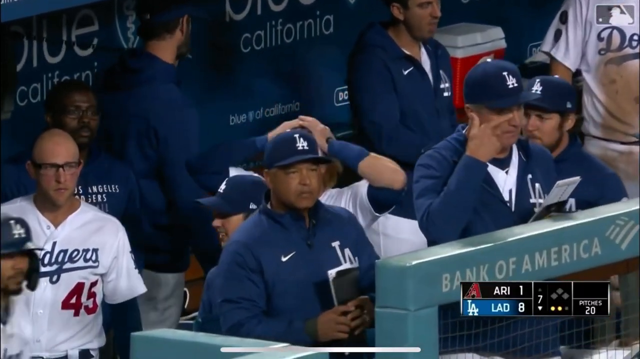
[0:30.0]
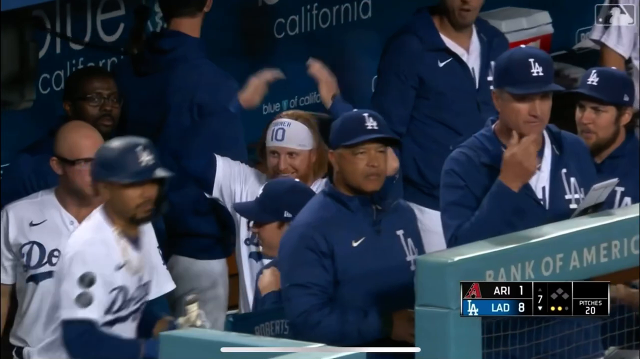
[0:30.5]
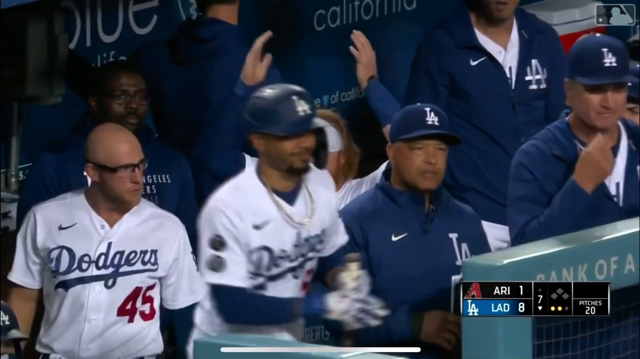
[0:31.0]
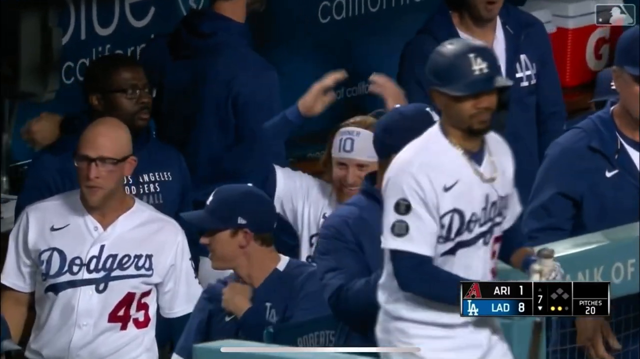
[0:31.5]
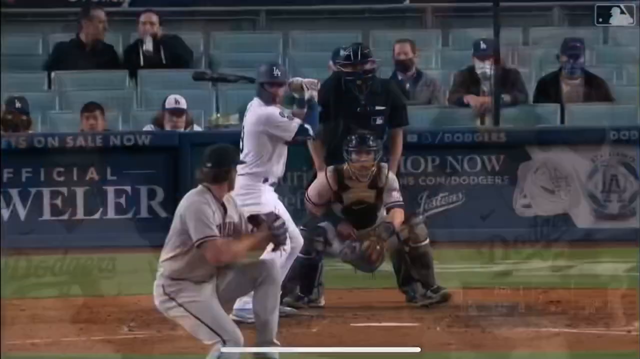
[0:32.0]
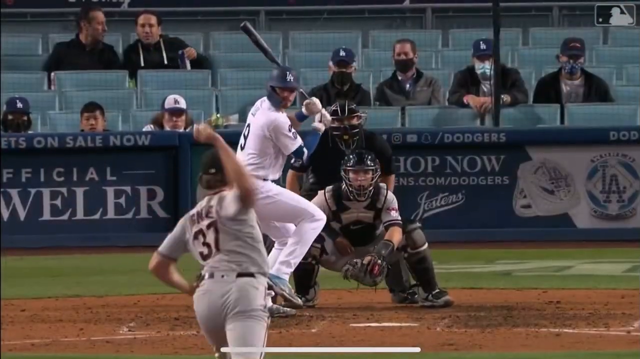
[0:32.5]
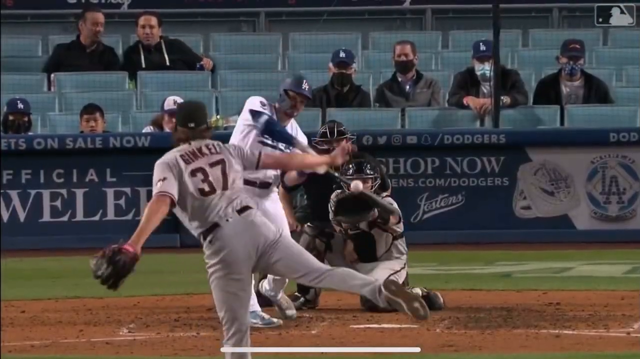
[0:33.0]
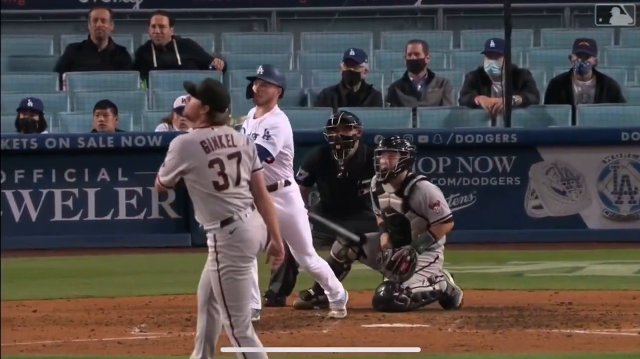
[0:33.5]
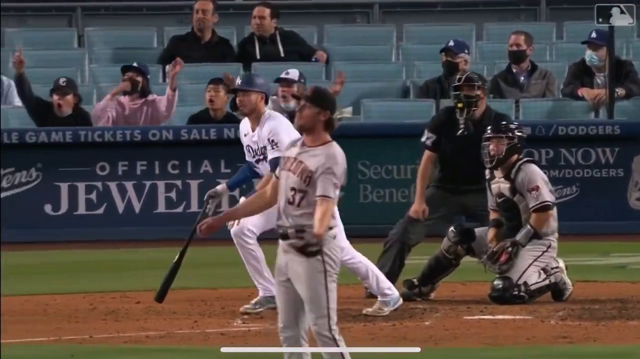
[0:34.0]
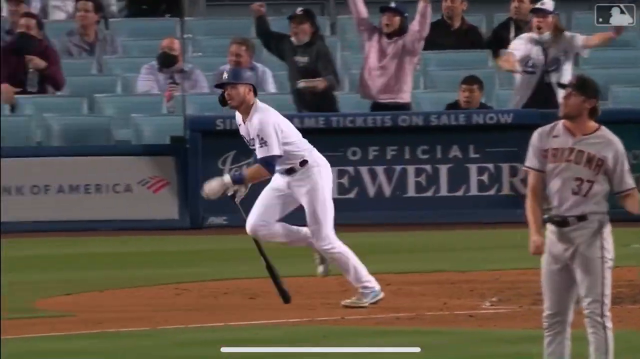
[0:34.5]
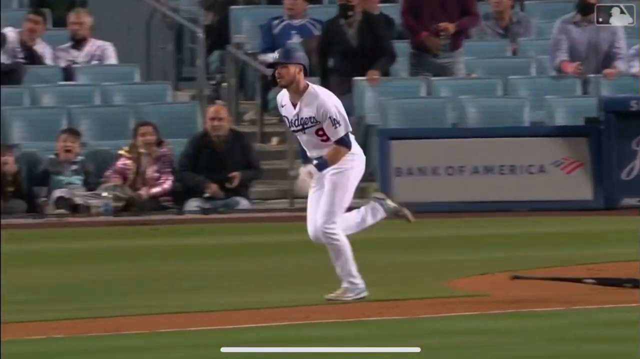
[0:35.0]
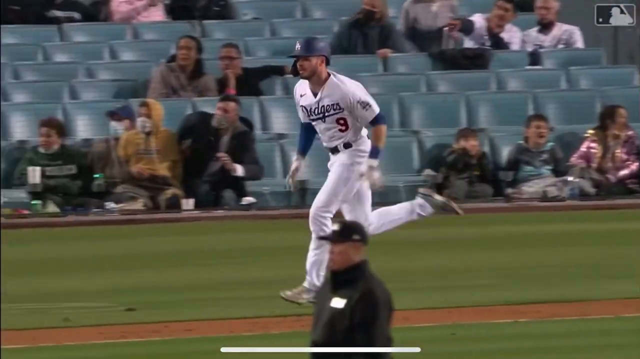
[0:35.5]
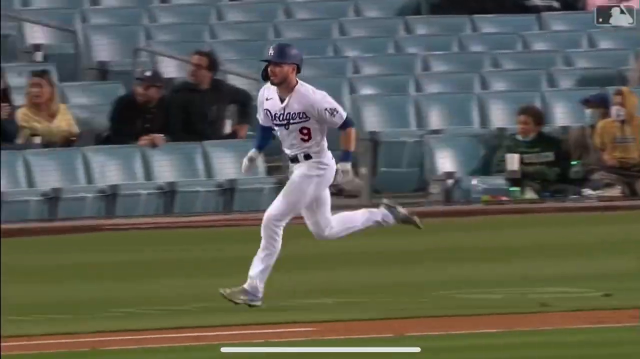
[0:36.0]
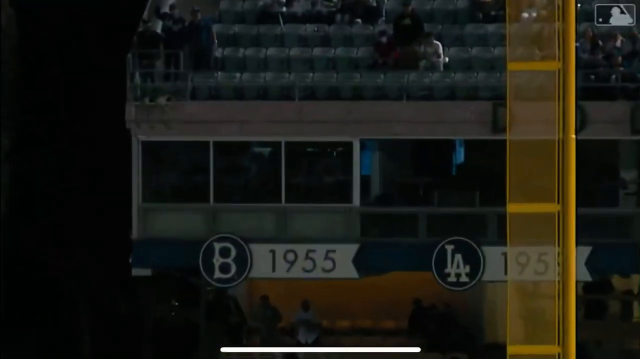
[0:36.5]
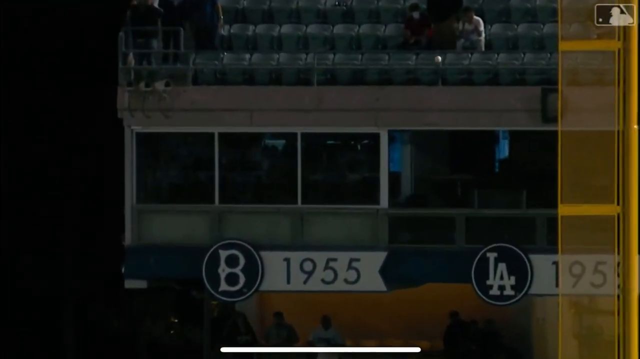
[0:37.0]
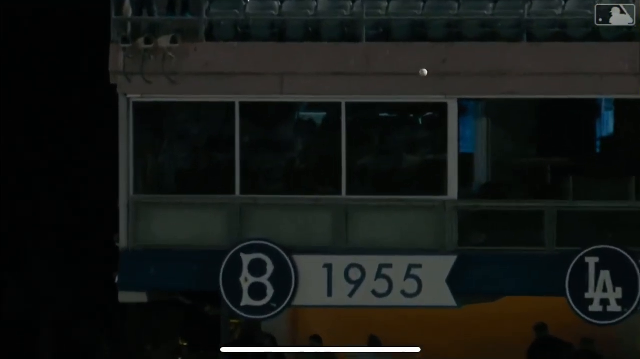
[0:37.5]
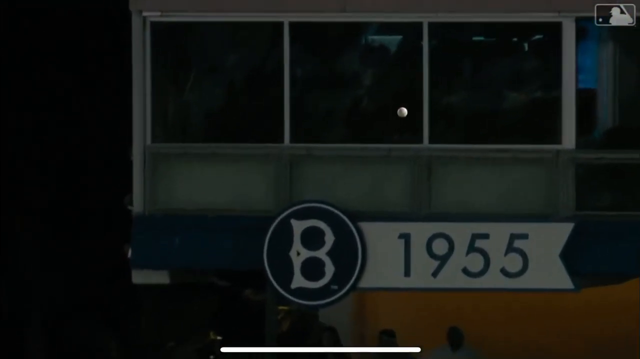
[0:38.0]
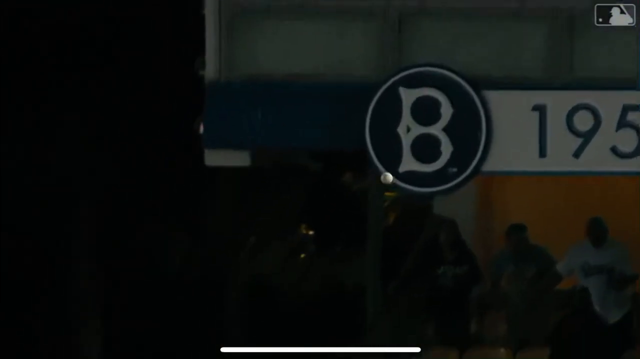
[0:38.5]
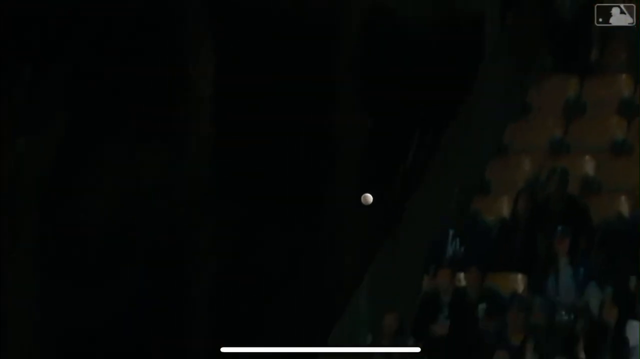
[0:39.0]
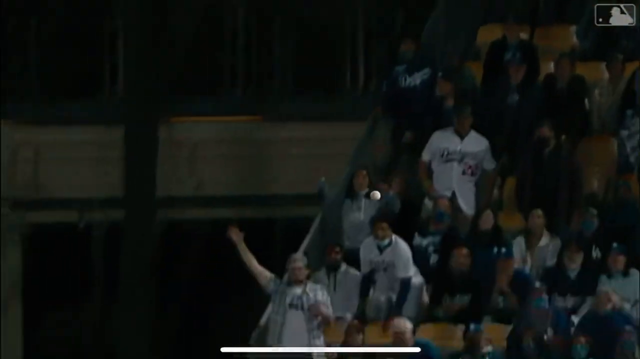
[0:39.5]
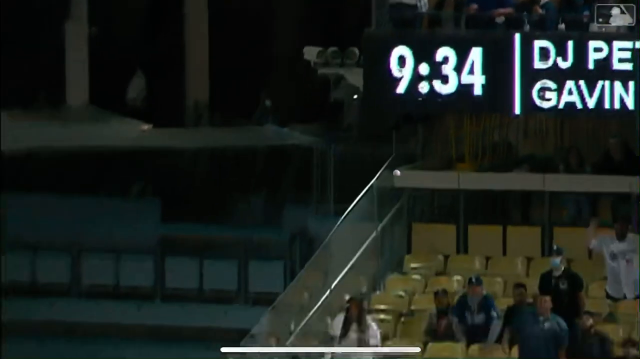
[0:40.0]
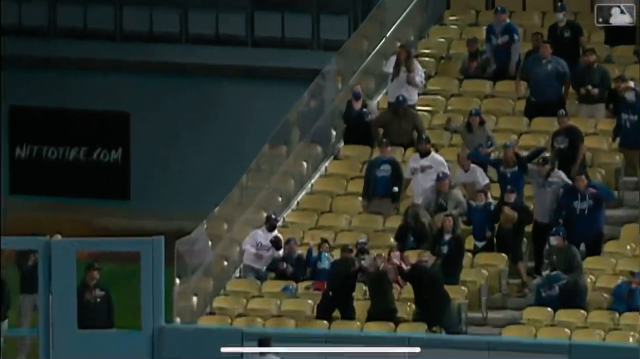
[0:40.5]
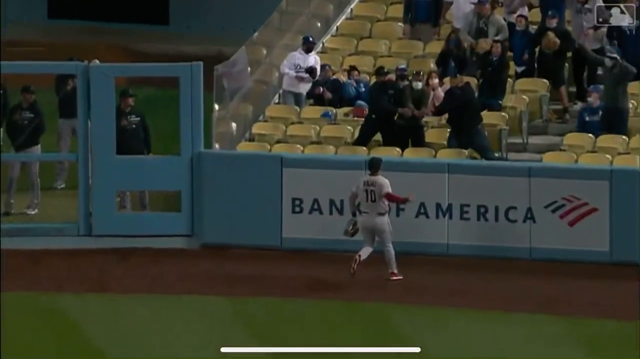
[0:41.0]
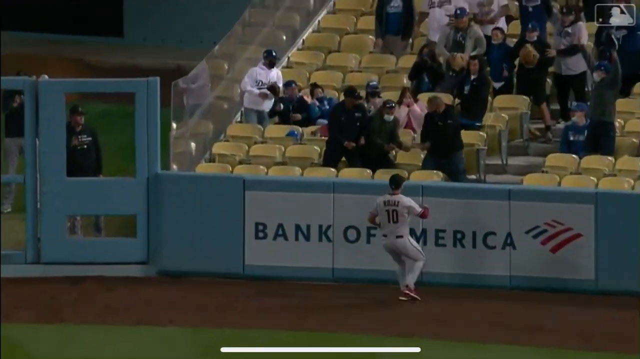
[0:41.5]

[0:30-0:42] The Los Angeles Dodgers dugout is shown after the grand slam. The pitch is shown again; it looks like a fastball, right down the middle, and the Dodgers player, number 9, crushes it. The player sets the bat down and runs at full speed, then the view cuts to the baseball soaring through the air and landing in the stands. The game appears to be at nighttime, as it looks fairly dark outside. Number 10 on the Diamondbacks runs toward the ball but cannot catch it as it goes into the stands.